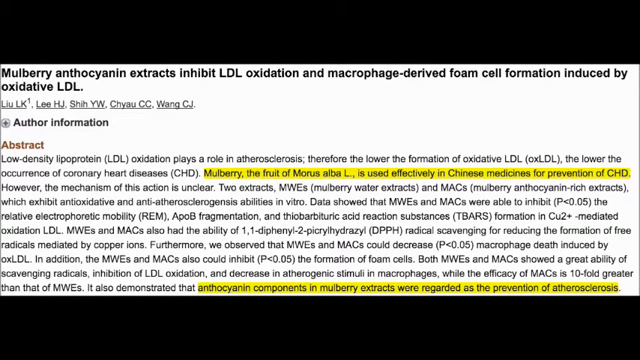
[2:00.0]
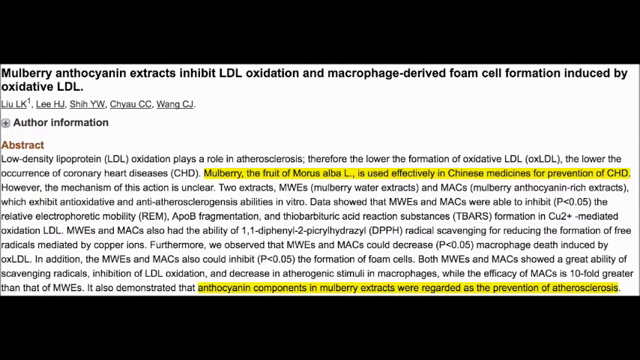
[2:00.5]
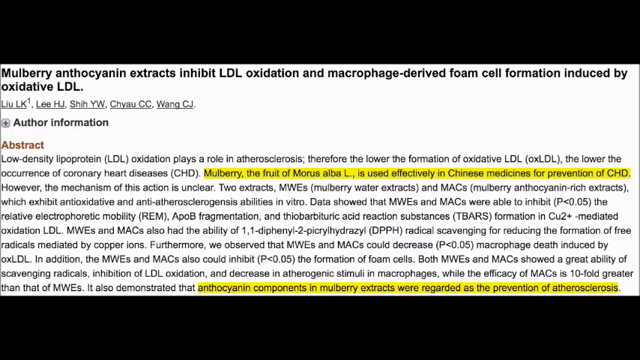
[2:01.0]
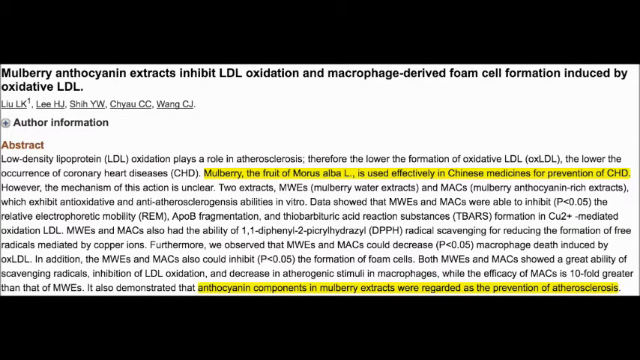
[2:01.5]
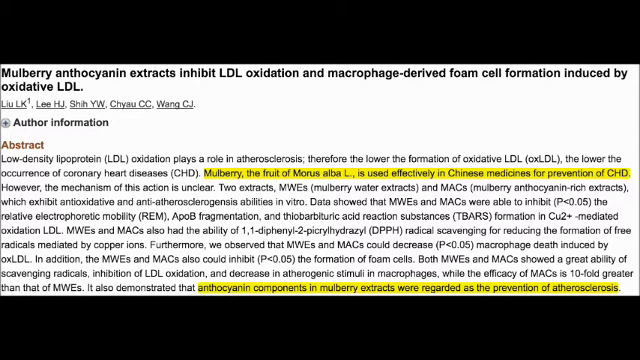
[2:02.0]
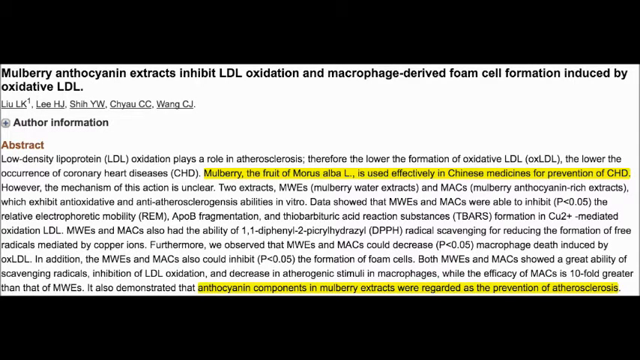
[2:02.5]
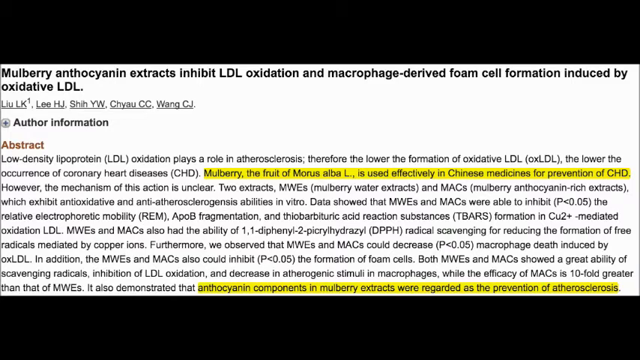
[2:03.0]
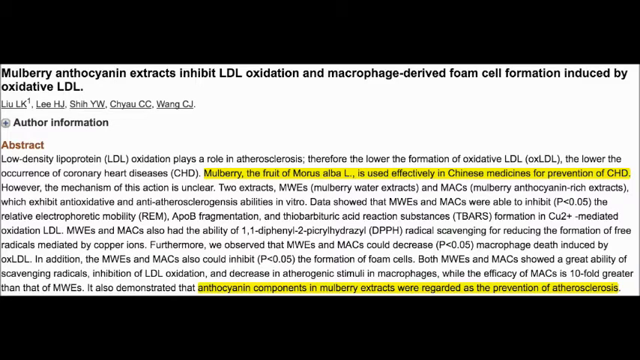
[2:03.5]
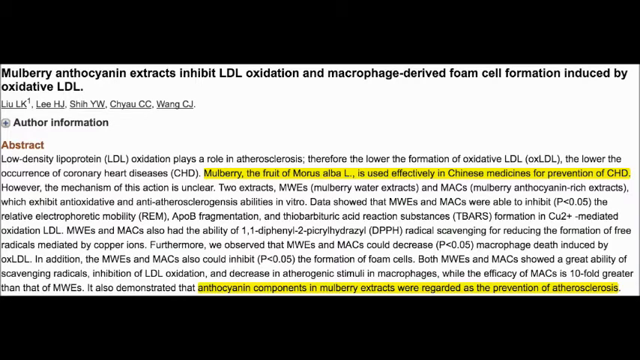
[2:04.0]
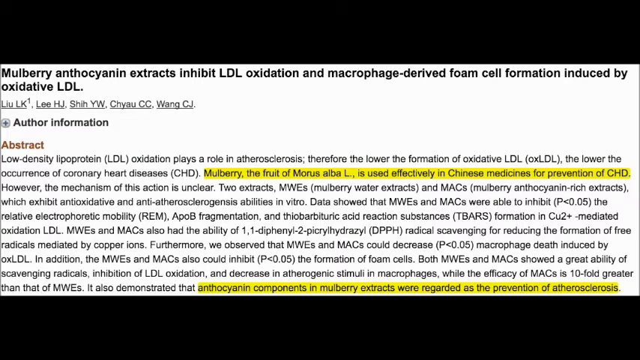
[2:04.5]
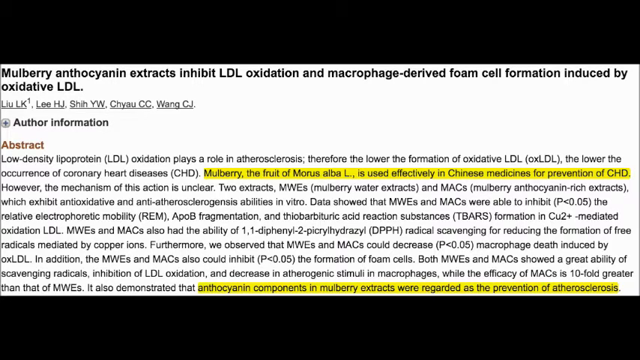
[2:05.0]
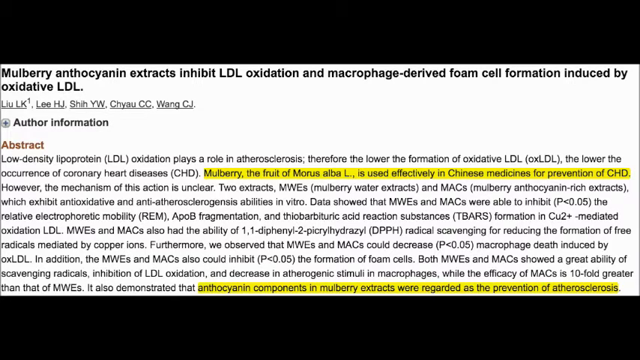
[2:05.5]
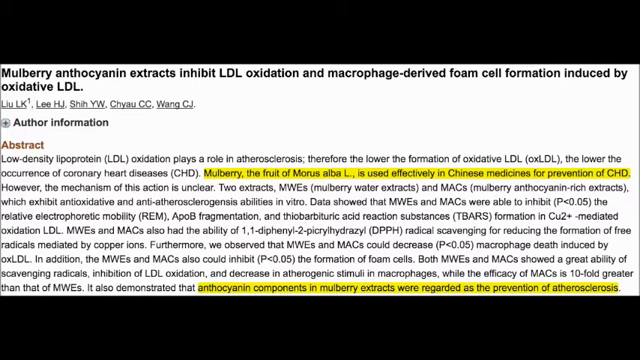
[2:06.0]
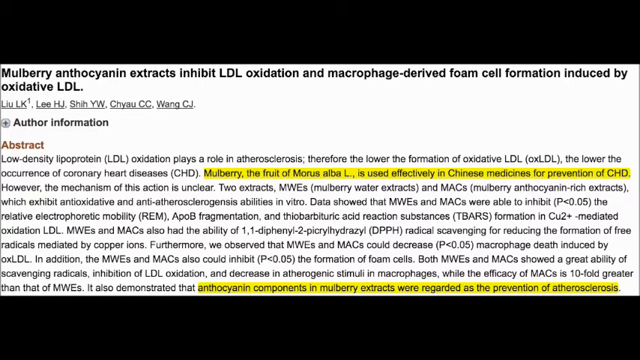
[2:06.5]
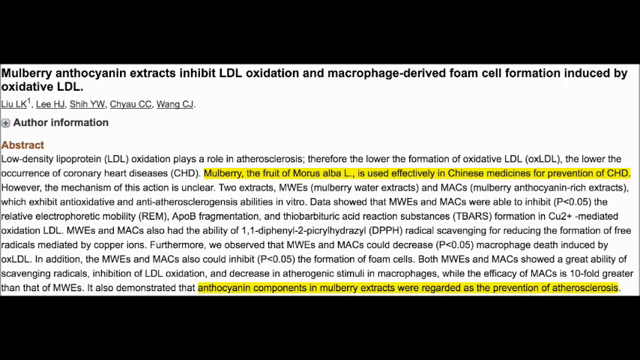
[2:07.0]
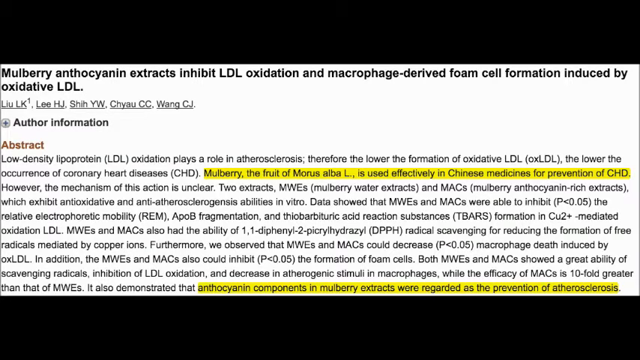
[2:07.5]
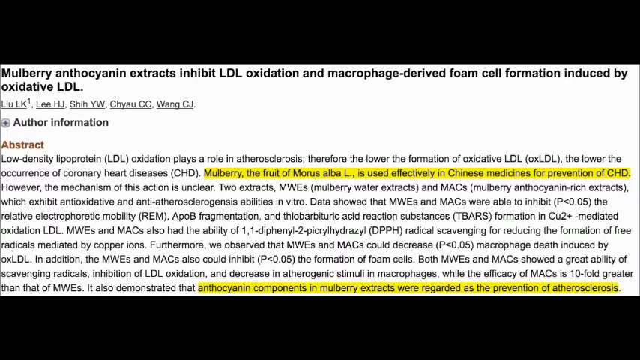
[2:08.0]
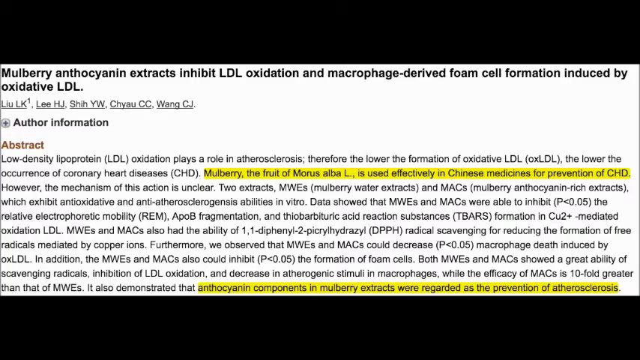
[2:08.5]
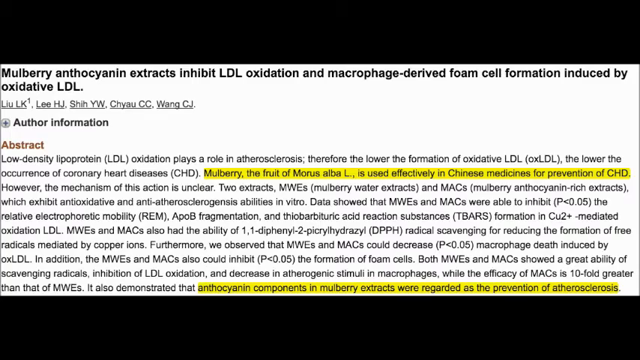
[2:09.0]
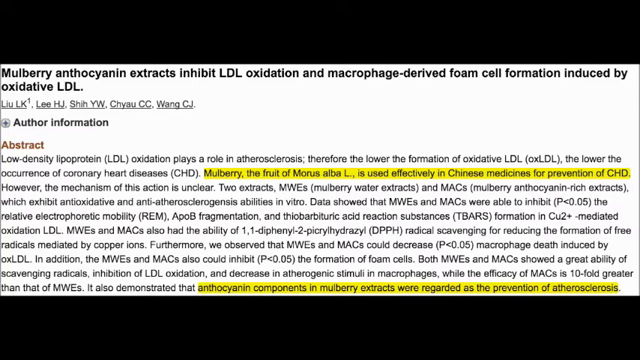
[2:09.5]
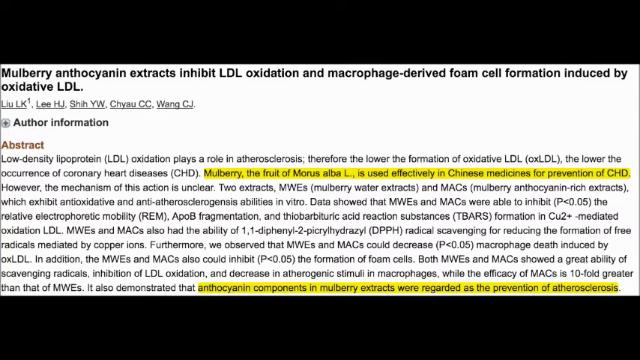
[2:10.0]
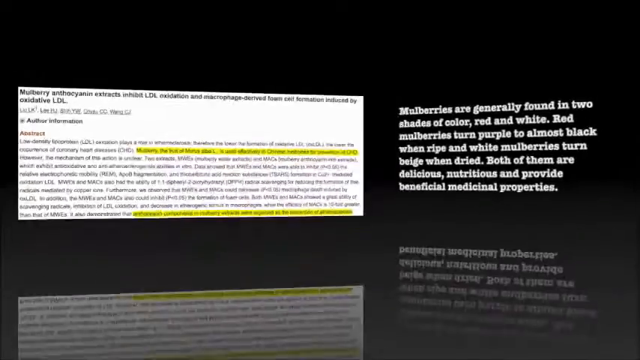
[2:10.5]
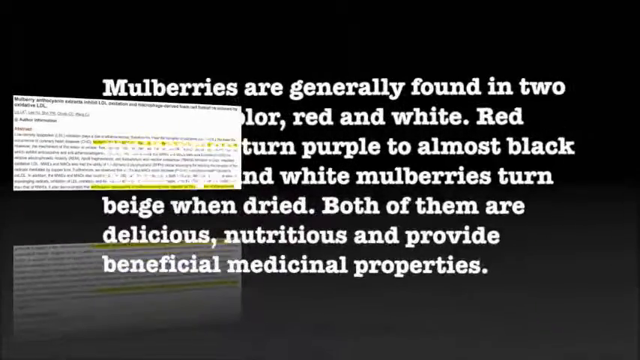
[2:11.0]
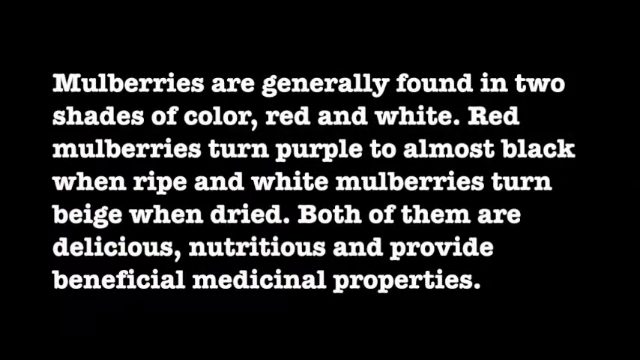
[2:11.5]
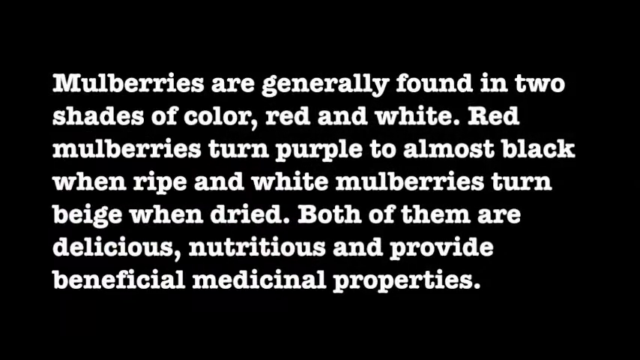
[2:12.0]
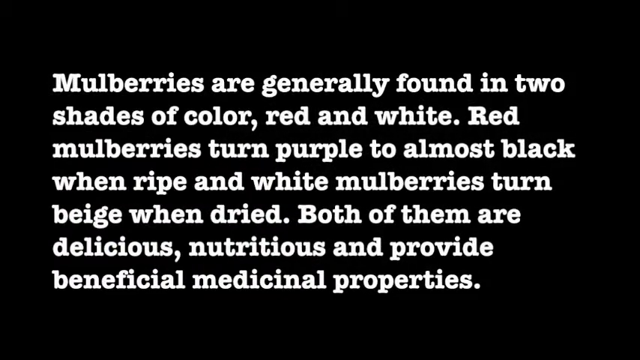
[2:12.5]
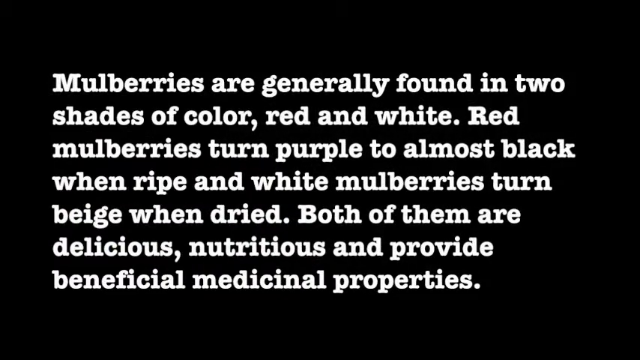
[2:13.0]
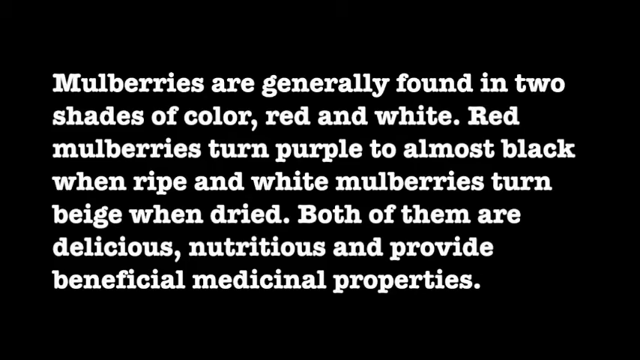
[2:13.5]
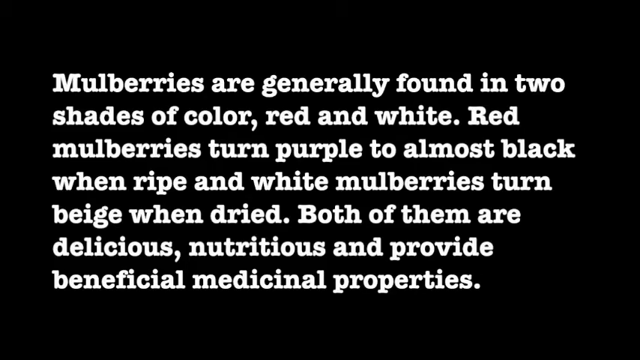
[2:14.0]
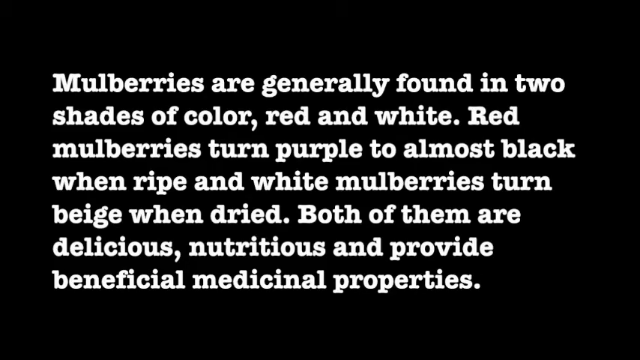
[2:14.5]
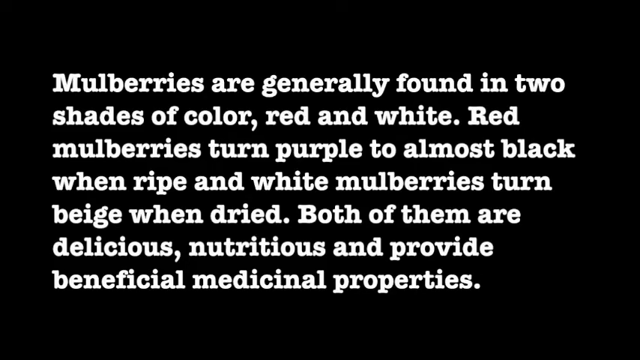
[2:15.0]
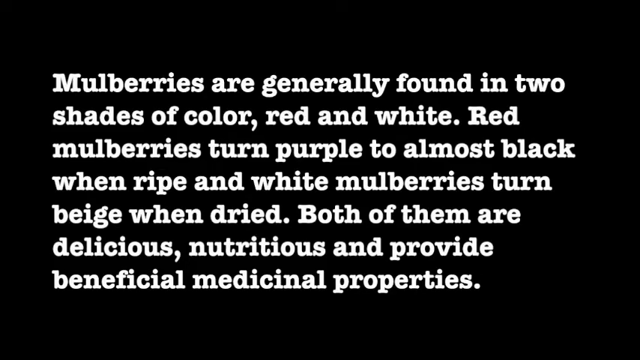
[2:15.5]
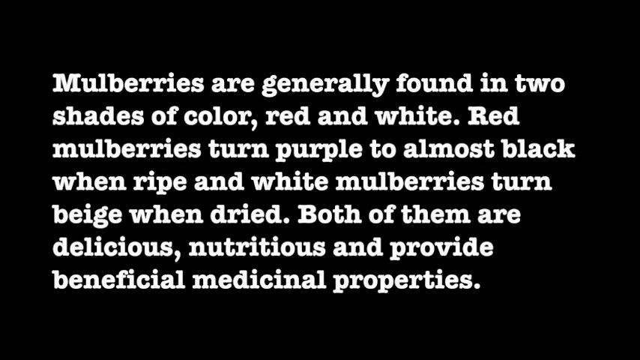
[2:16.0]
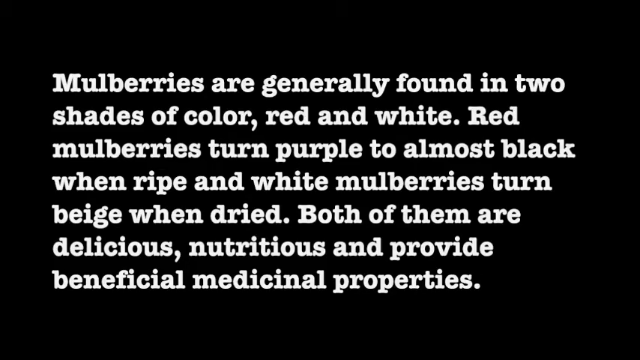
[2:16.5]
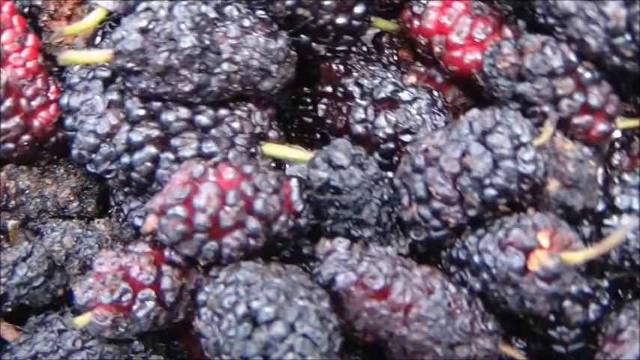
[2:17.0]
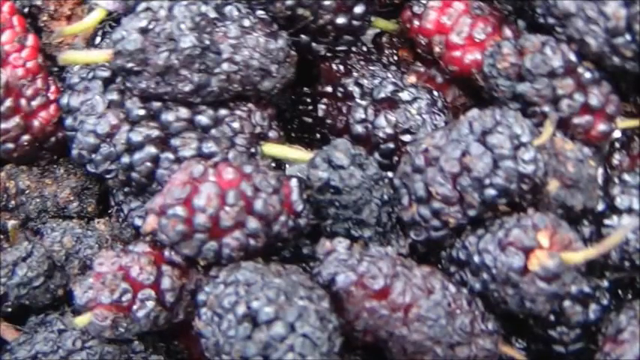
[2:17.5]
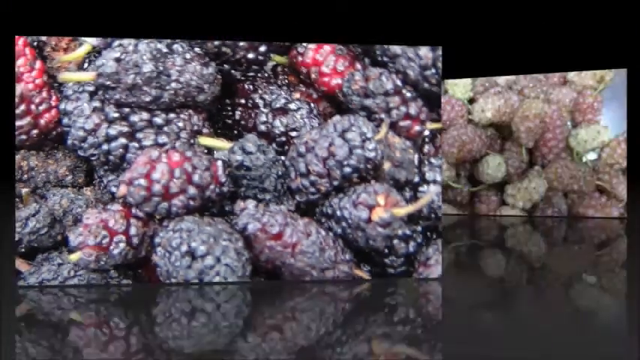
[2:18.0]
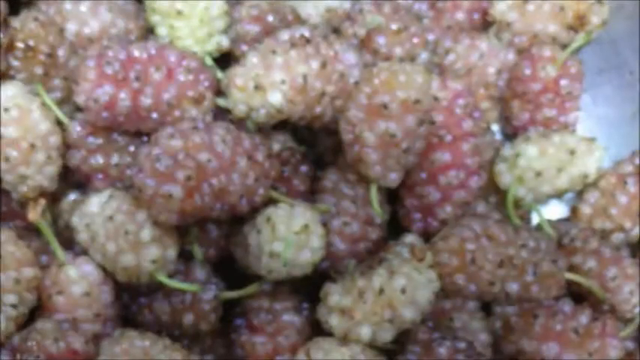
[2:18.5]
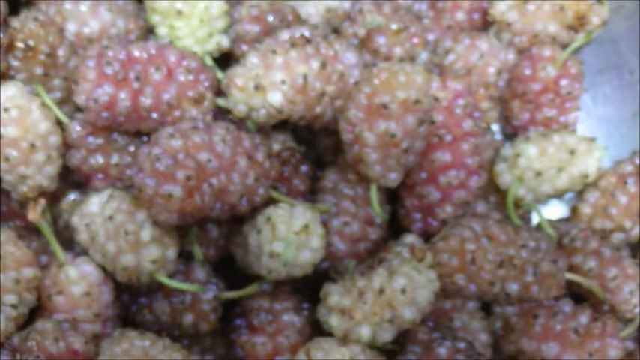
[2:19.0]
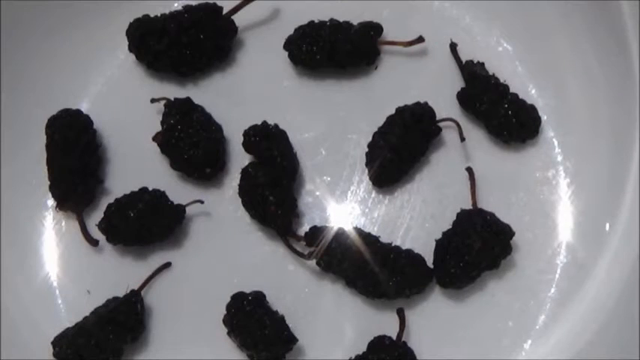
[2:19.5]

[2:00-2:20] A scientific study is on the screen with its full abstract visible, titled "mulberry anthocyanin extracts inhibit LDL oxidation and macrophage derived foam cell formation induced by oxidative LDL." The stated purpose is that low-density lipoprotein, or LDL, oxidation plays a role in atherosclerosis, so the lower the formation of oxidative LDL, the lower the occurrence of coronary heart disease. A highlighted portion of the abstract reads "mulberry the fruit of Morris albis is used effectively in Chinese medicine for prevention of coronary heart disease," and another highlighted portion says it is also demonstrated that anthocyanin components and mulberry extracts were regarded as the prevention of atherosclerosis. The screen then switches to a black screen with white text reading "mulberries are generally found in two shades of color red and white red mulberries turn purple to almost black when ripe and white mulberries turn beige when dried both of them are delicious nutritious and provide beneficial medicinal properties." Pictures of the different colors of mulberries follow, showing dark mulberries and then light mulberries.